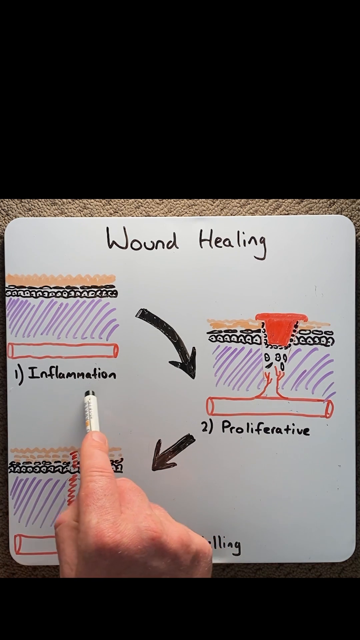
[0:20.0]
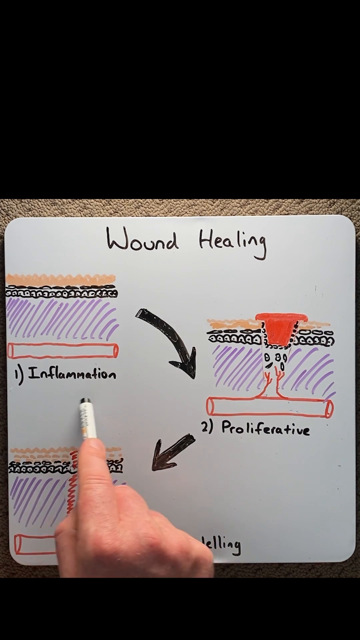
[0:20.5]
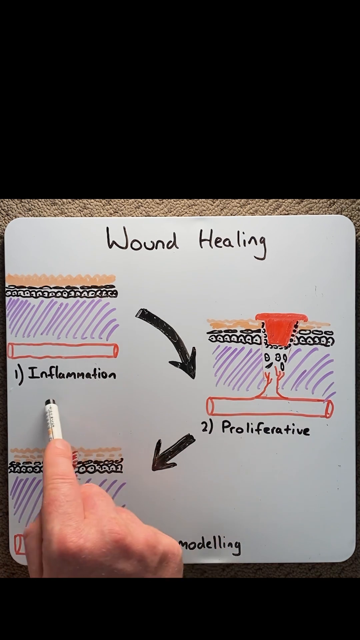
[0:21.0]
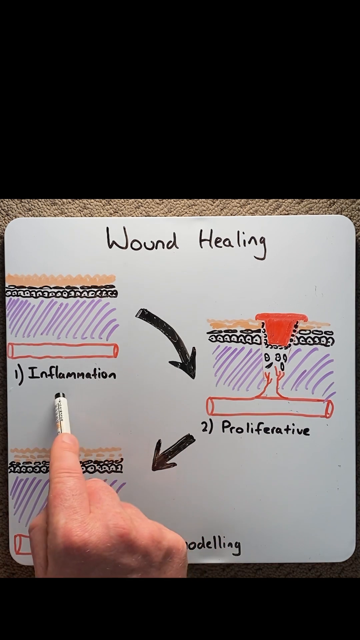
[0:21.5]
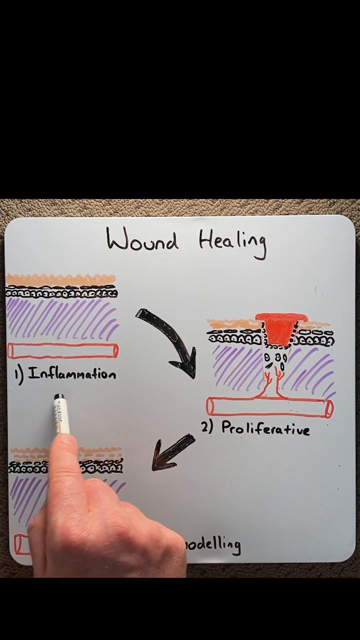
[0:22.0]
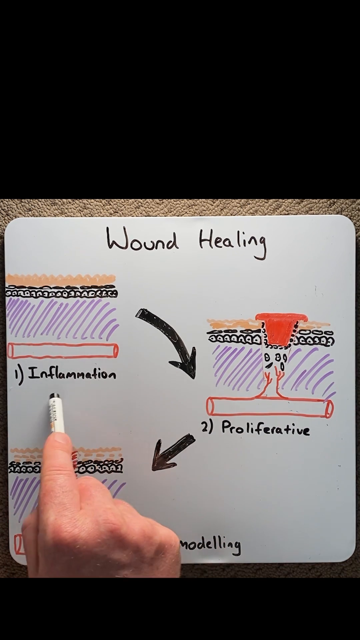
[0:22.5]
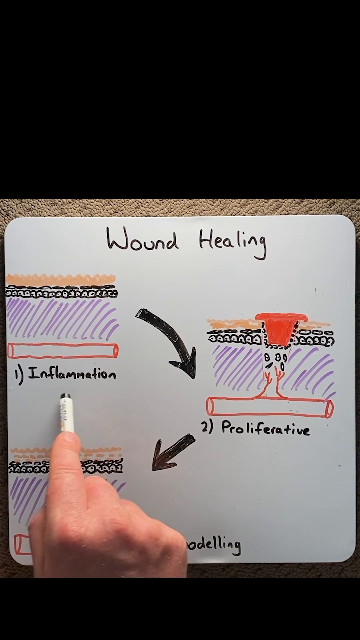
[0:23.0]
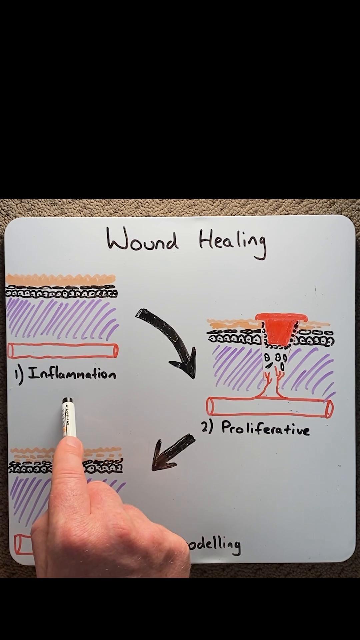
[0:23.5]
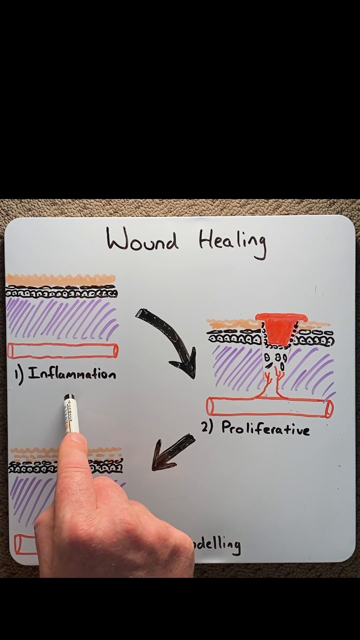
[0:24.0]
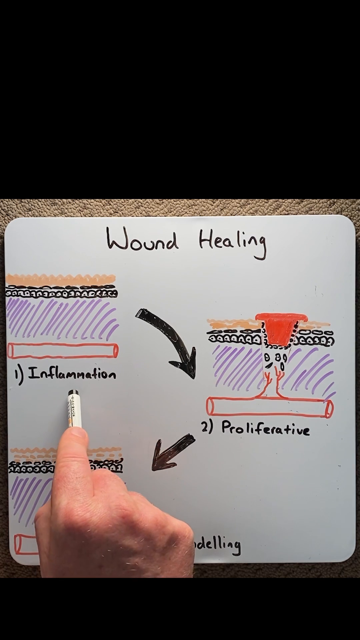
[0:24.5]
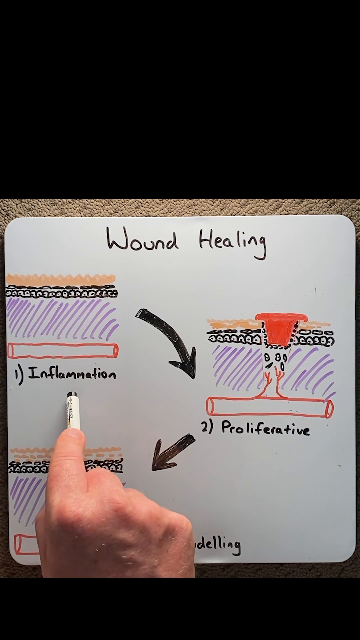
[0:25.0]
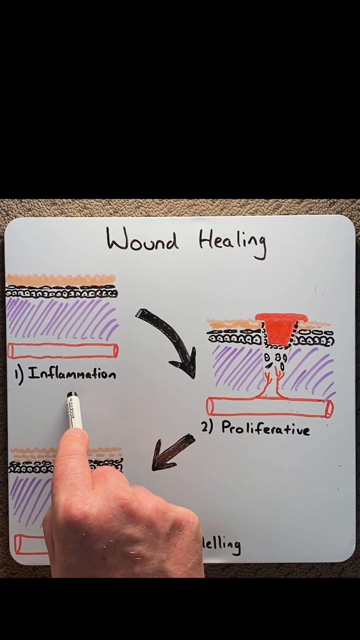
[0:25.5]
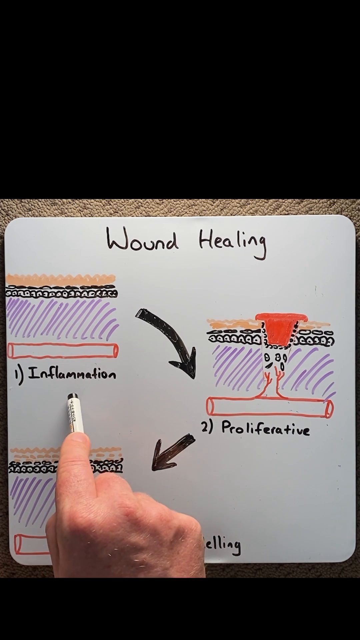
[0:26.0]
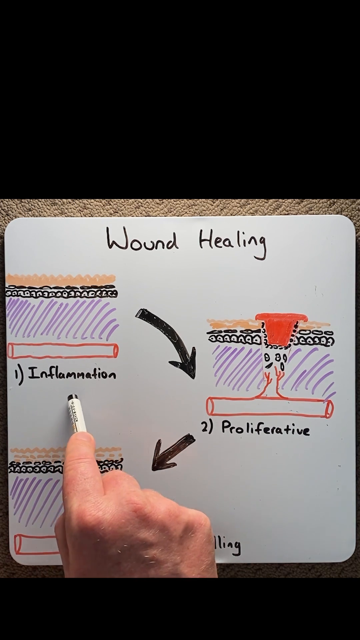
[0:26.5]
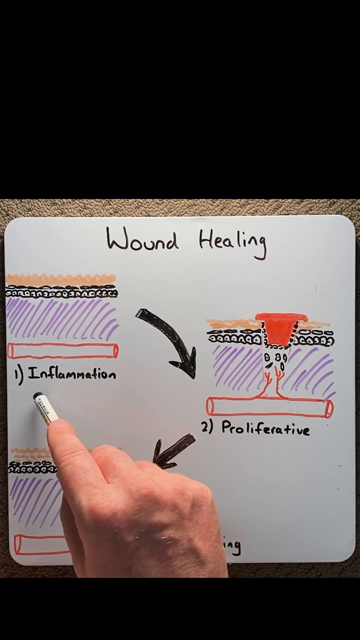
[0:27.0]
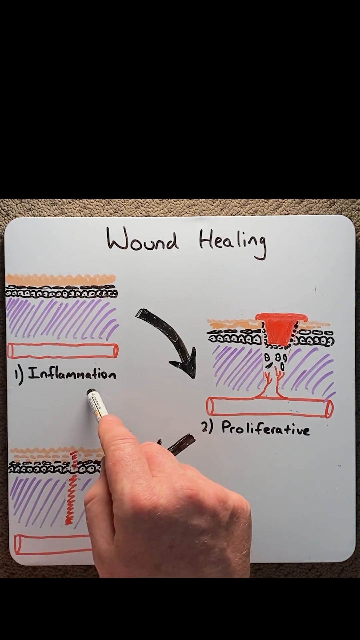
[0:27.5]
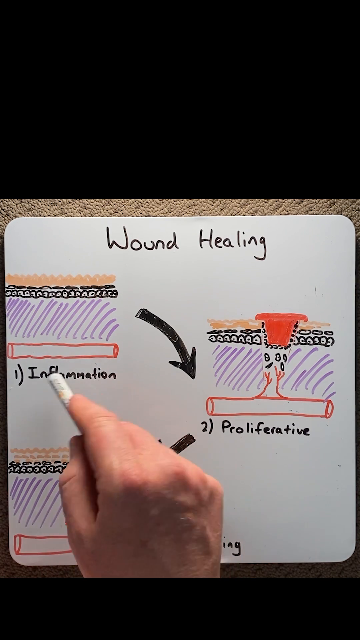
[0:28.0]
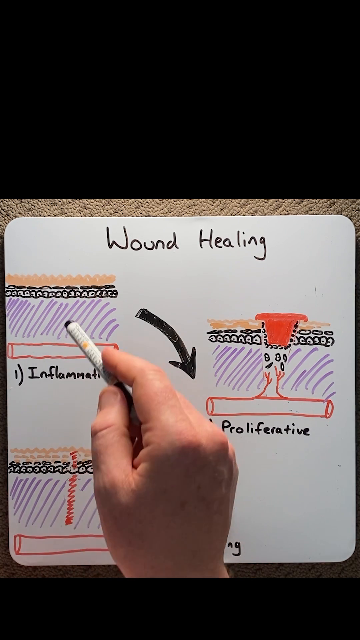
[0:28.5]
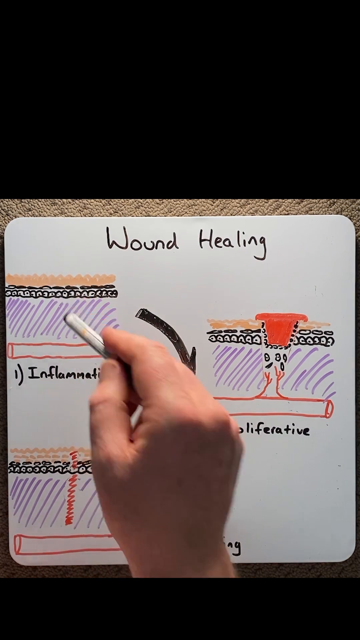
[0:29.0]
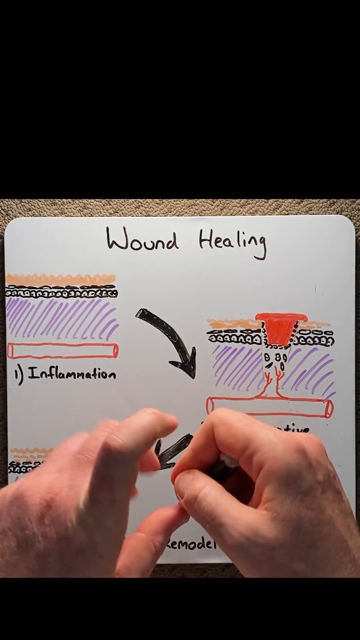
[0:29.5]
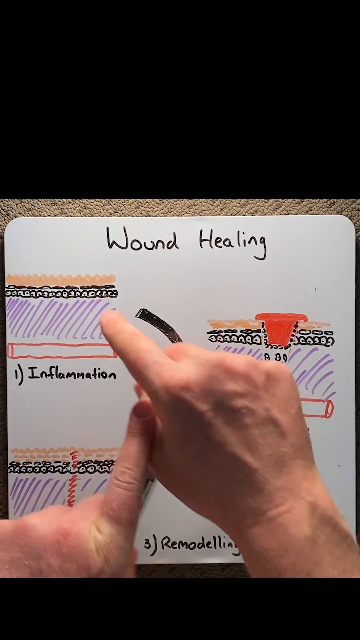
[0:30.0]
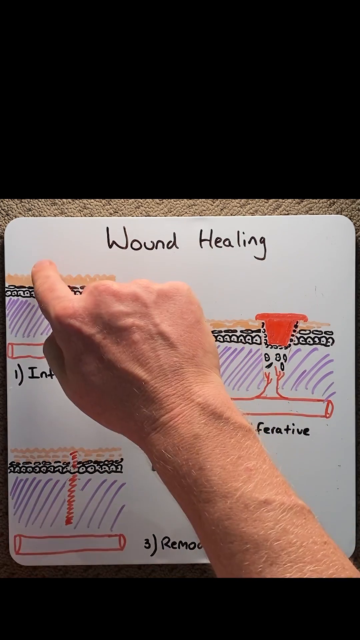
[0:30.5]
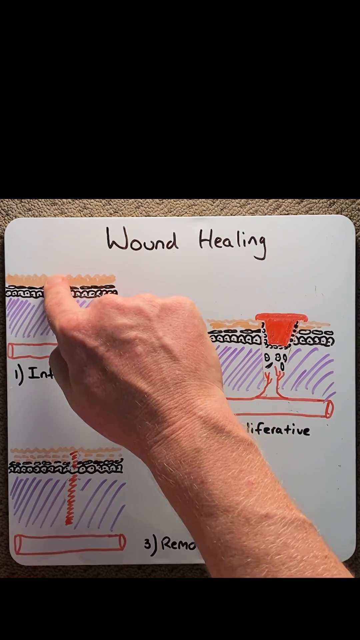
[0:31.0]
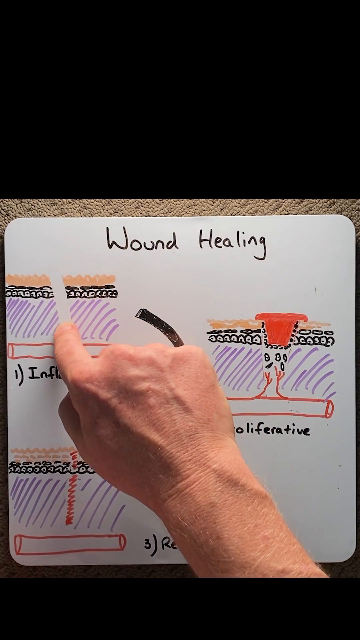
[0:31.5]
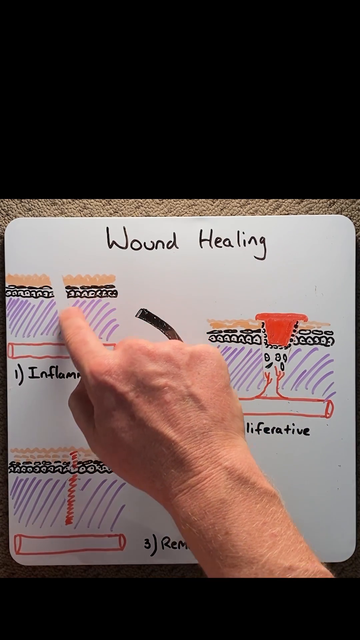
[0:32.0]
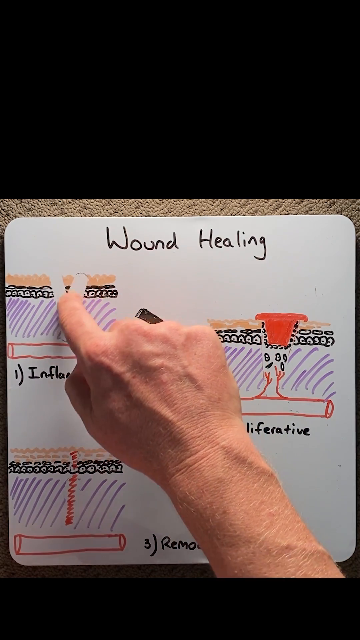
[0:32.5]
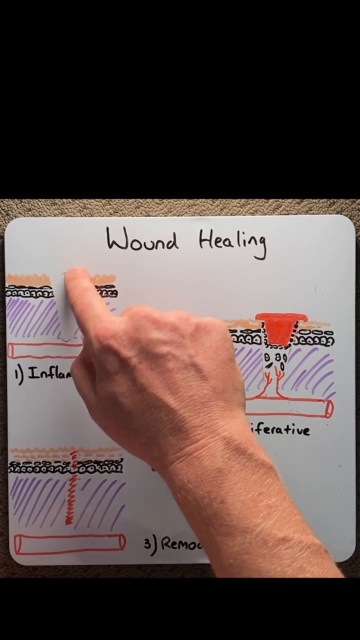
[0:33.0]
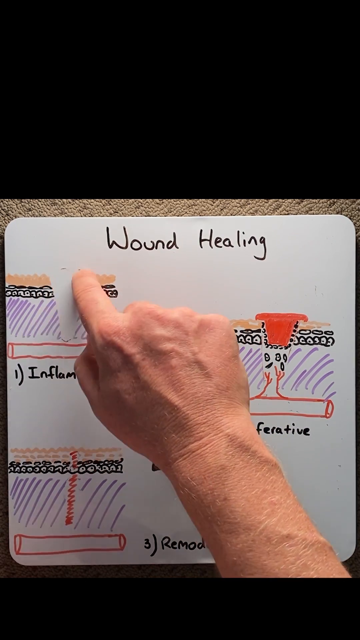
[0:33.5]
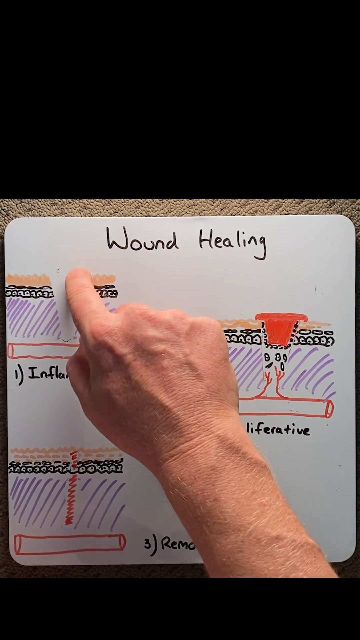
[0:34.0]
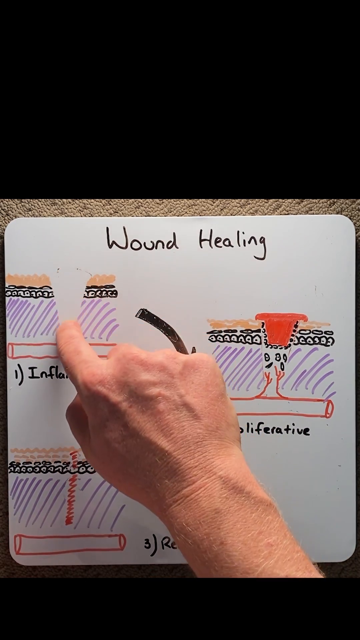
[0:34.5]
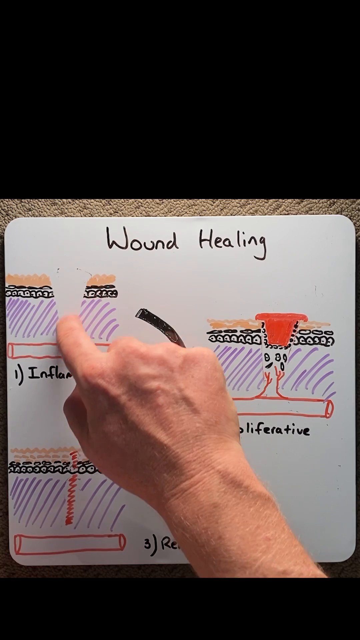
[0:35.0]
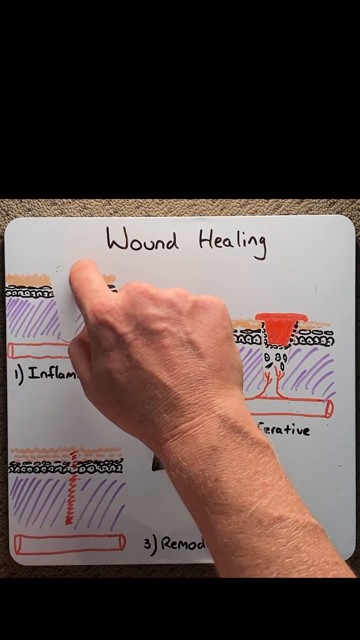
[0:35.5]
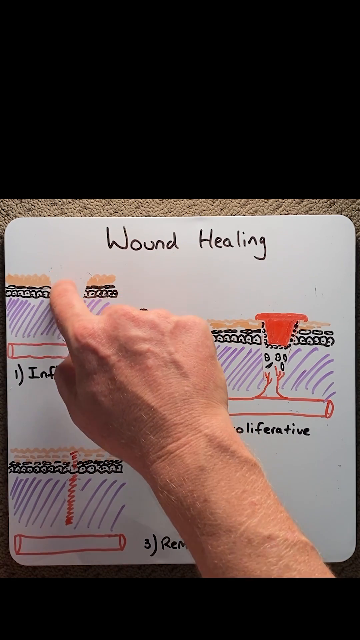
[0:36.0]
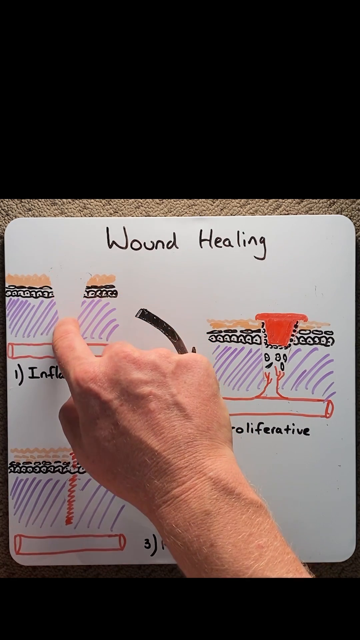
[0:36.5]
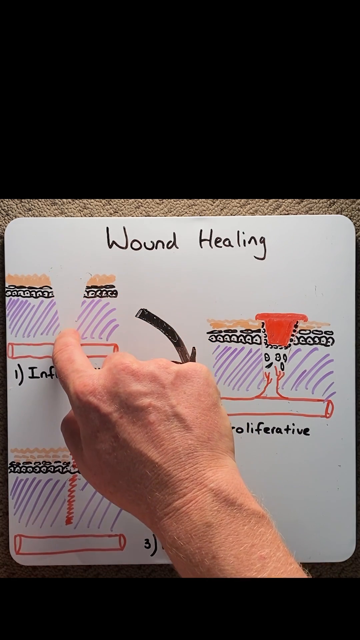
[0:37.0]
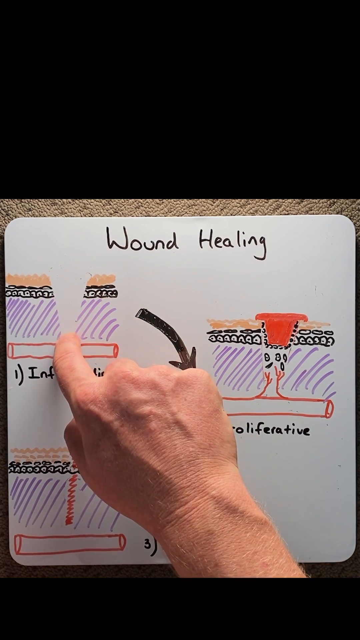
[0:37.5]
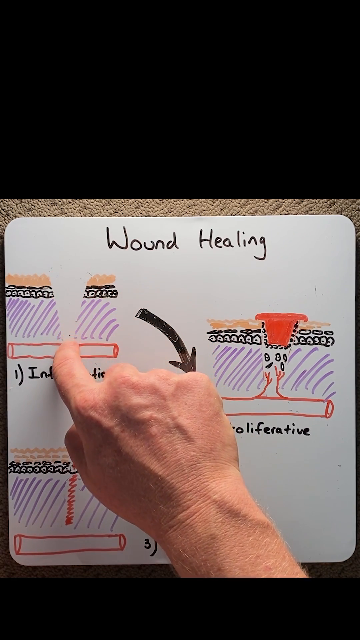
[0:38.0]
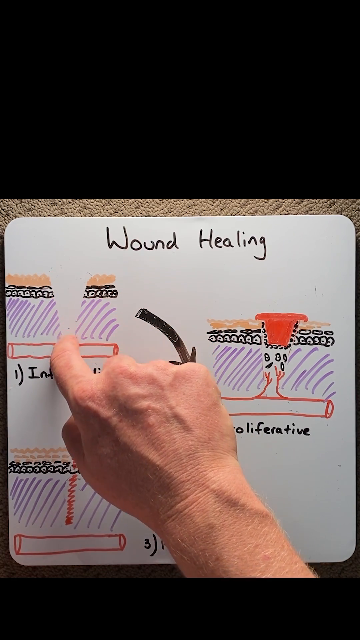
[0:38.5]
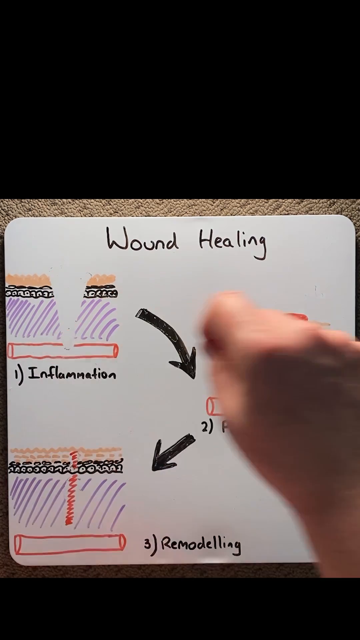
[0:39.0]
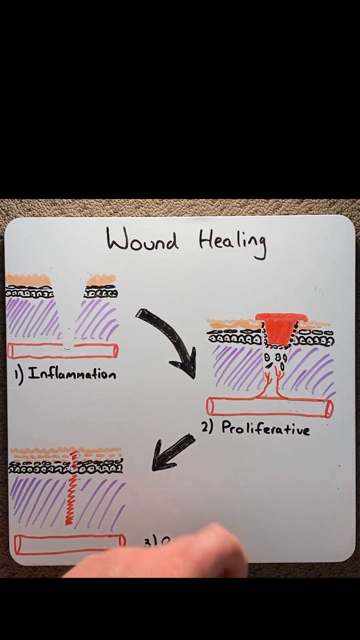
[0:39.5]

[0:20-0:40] The shot is a kind of point-of-view view of the whiteboard, showing only a man's hands touching it. He starts to erase part of the first step of the wound healing process, inflammation, so that the erasure makes a kind of V indent in the middle of the inflammation part. He erases with his bare finger rather than the eraser on the end of his marker. The second step is labeled proliferative and the third remodeling, each in colored marker. Carpet peeks out behind the whiteboard, so the board appears to be on the floor.